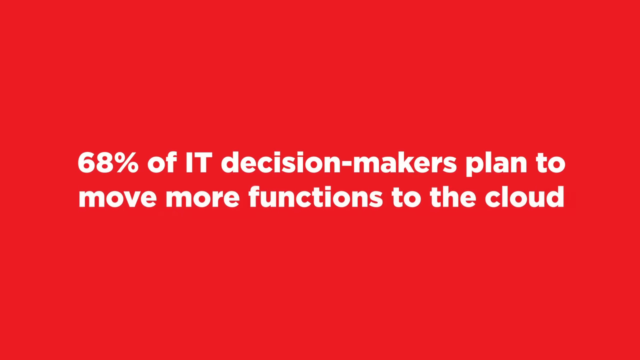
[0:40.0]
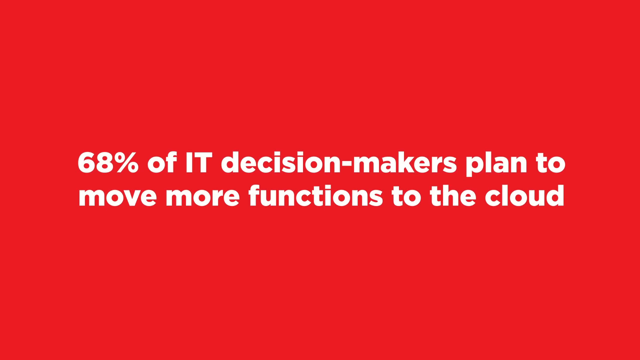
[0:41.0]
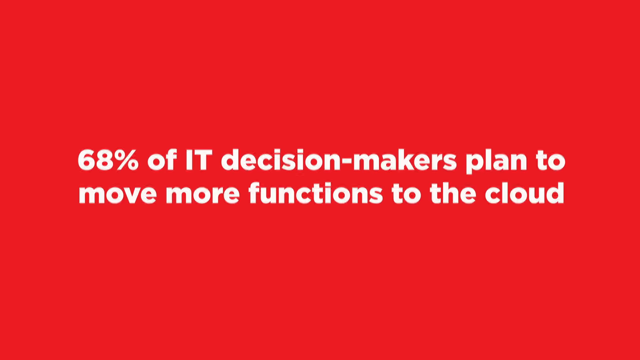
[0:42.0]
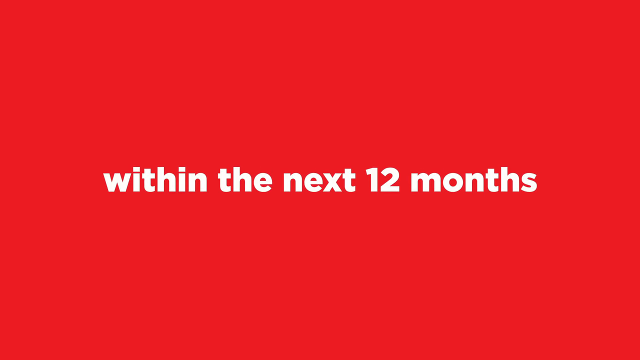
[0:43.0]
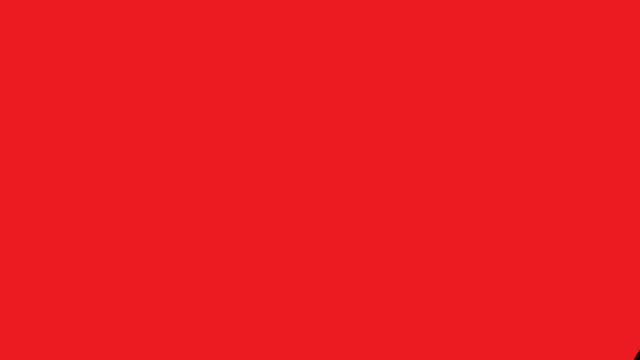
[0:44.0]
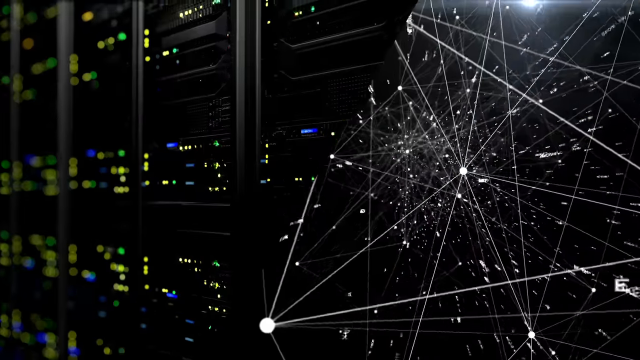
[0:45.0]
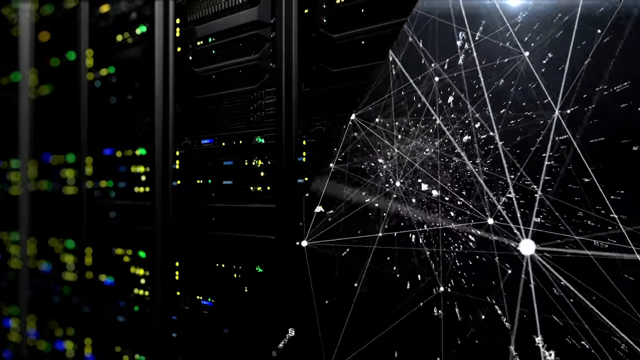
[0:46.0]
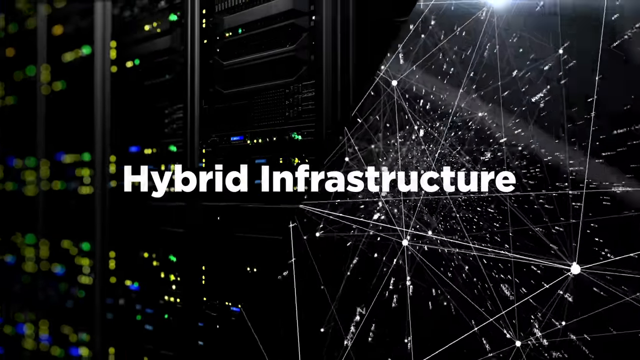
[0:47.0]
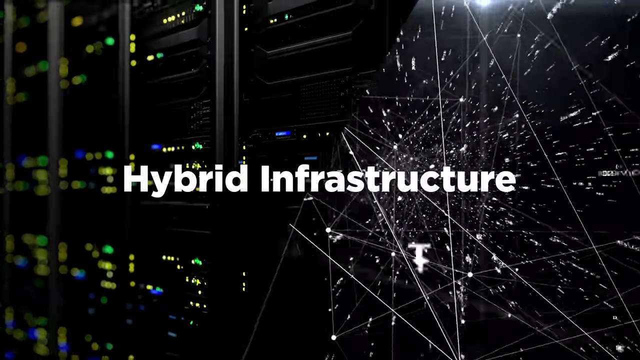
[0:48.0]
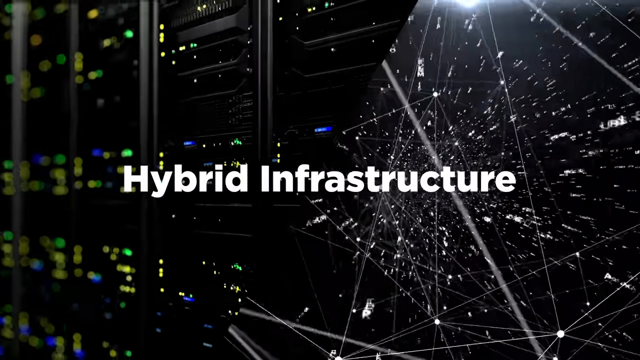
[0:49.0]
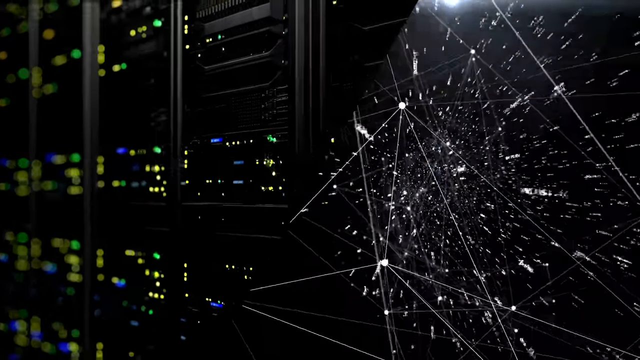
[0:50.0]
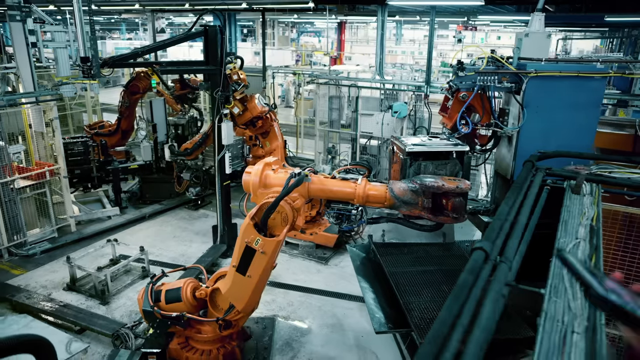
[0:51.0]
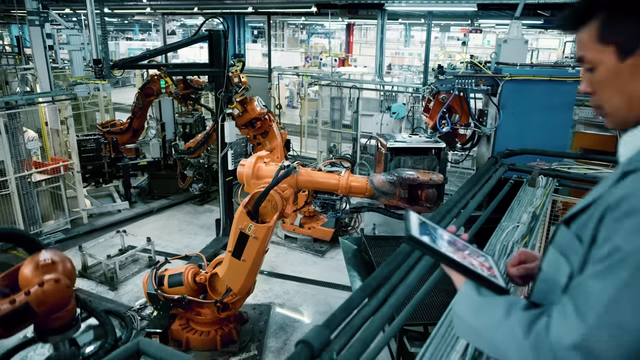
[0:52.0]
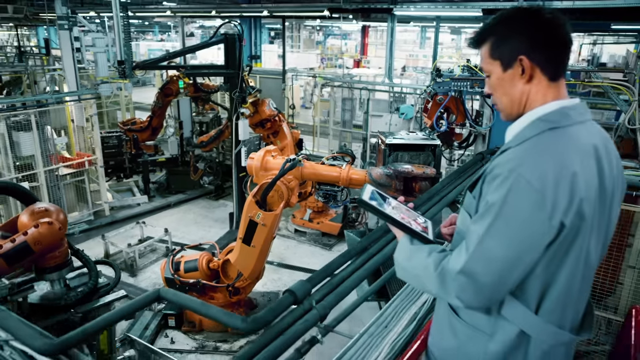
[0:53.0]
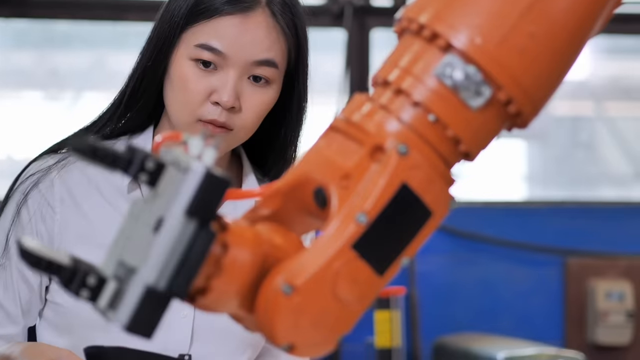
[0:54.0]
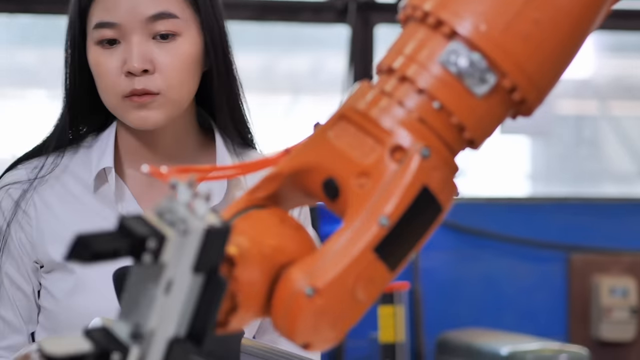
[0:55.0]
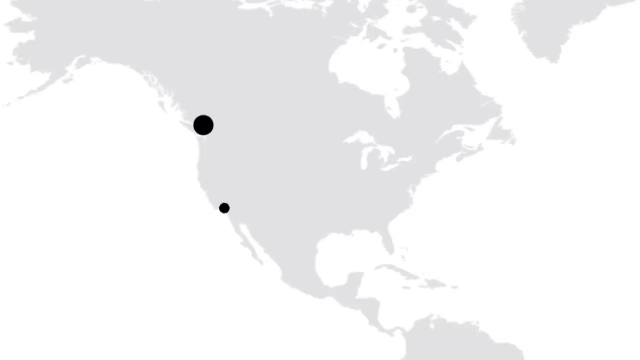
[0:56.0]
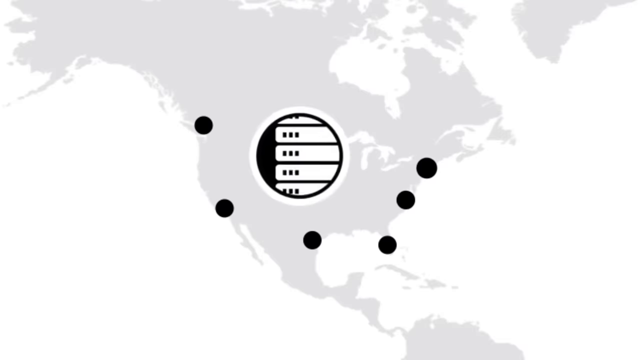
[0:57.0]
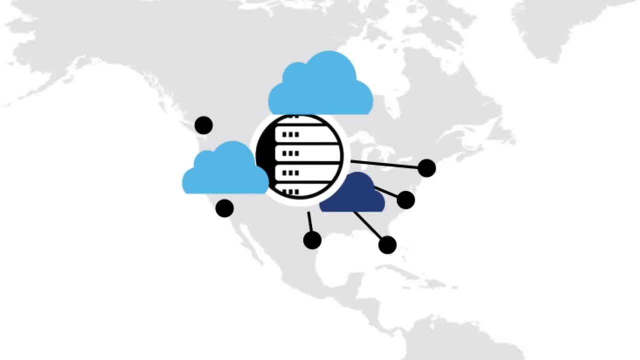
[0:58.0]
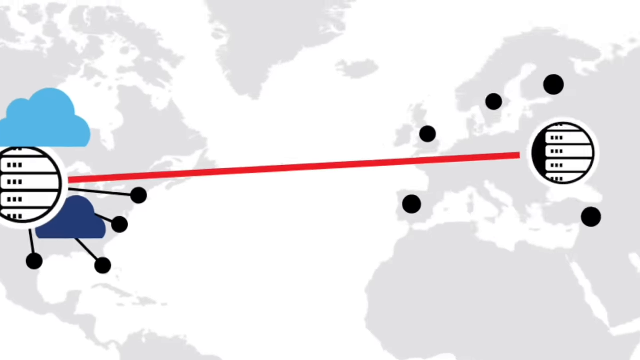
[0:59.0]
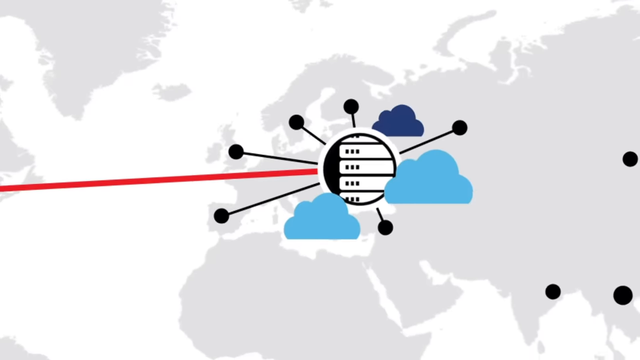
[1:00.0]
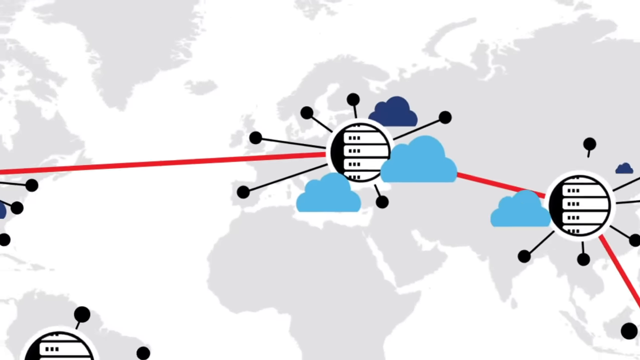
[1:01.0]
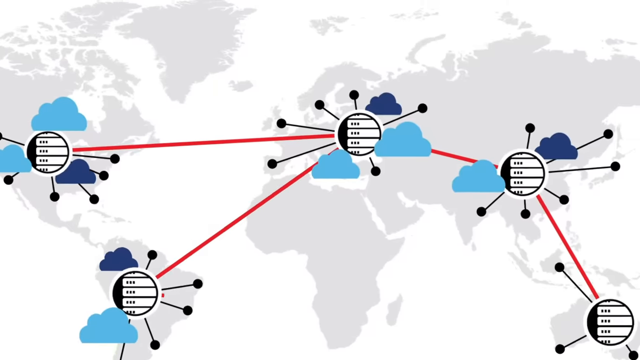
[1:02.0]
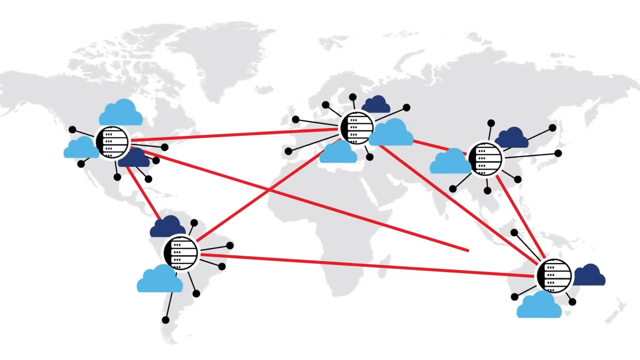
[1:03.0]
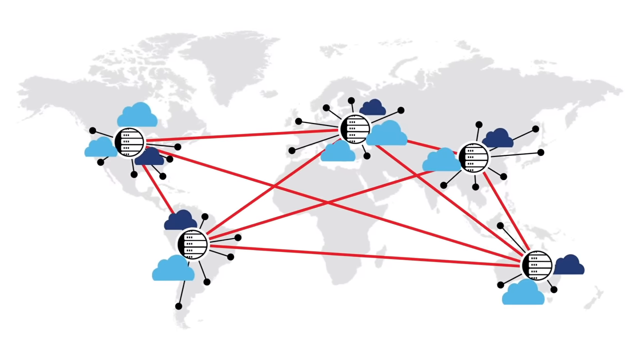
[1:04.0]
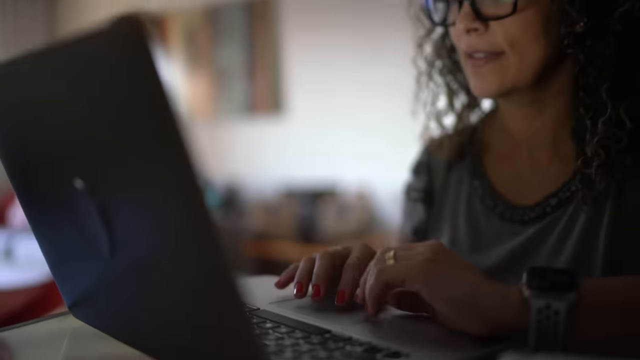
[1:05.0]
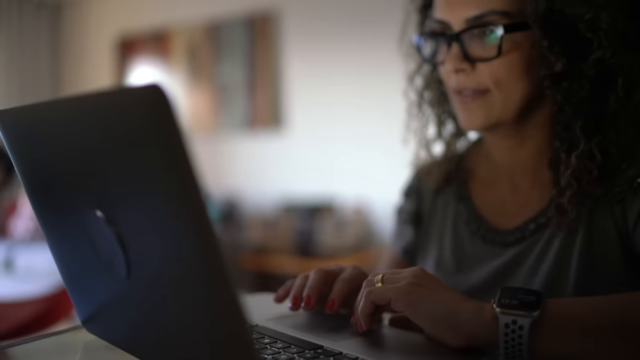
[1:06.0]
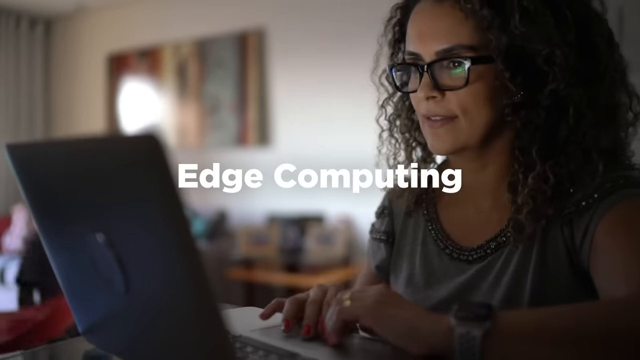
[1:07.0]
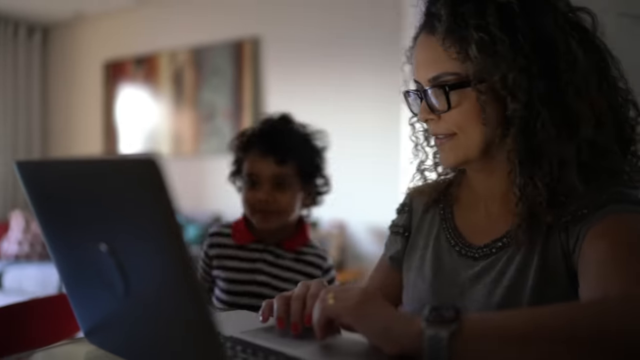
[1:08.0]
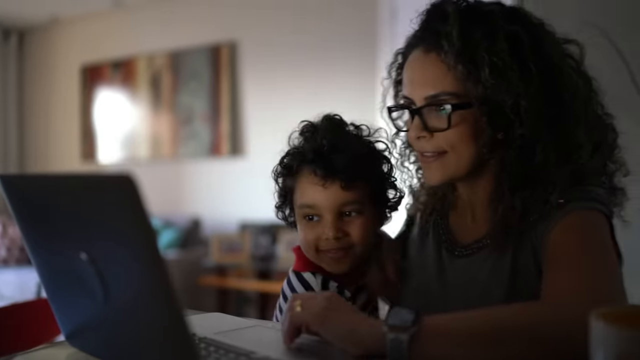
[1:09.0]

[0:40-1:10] A statistic about 68% of decision makers within the next 12 months using or switching to cloud appears, followed by more cyberspace and computer hybrid infrastructure graphics. The scene moves inside a building where there are robots, with people working and watching the robots. Cloud graphics and computer graphics follow, with red lines running through everything. Someone with glasses is on a laptop, and a woman and her son come up to a computer. Someone in a car is doing some work, probably on an iPad or a phone. Inside a factory building there are orange and green machines; one person wears a white lab coat and another, a male, wears a lab coat of a different color. Cloud graphics reach everywhere into the cyberspace imagery, including edge computing in the car. The commercial advertises cloud services.